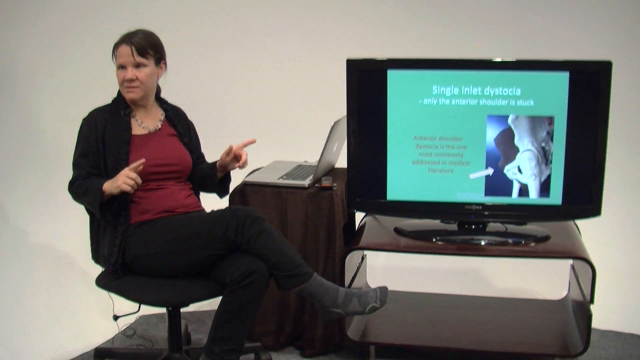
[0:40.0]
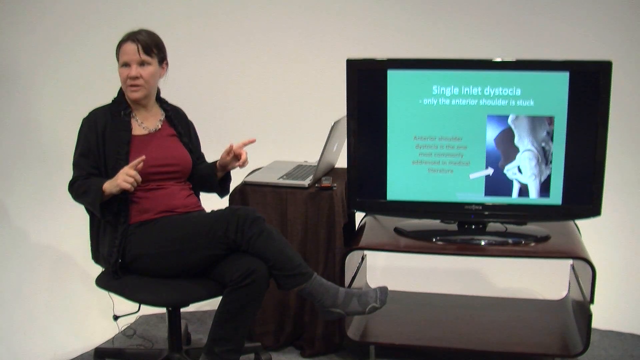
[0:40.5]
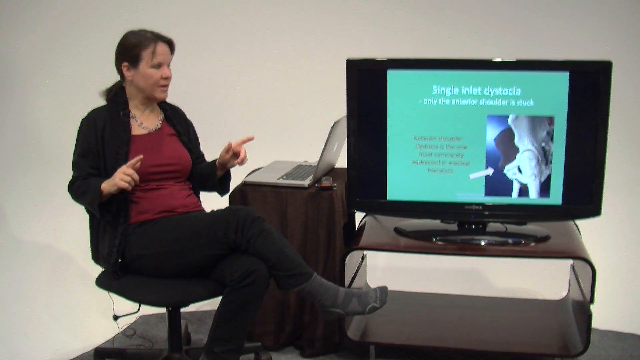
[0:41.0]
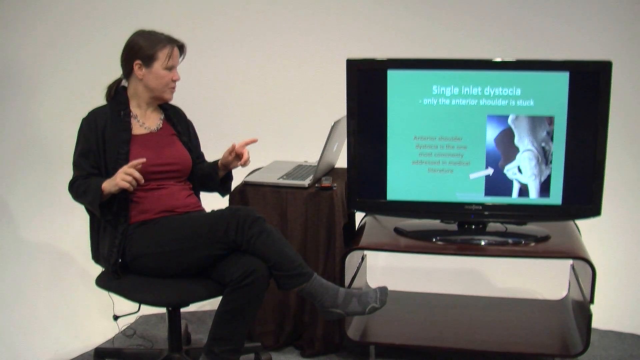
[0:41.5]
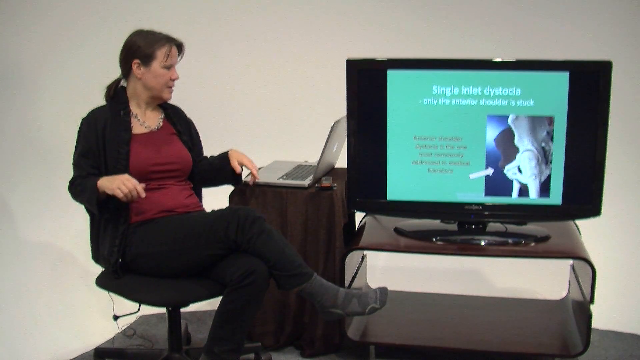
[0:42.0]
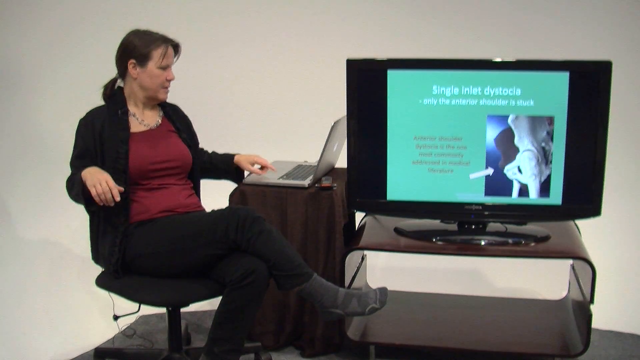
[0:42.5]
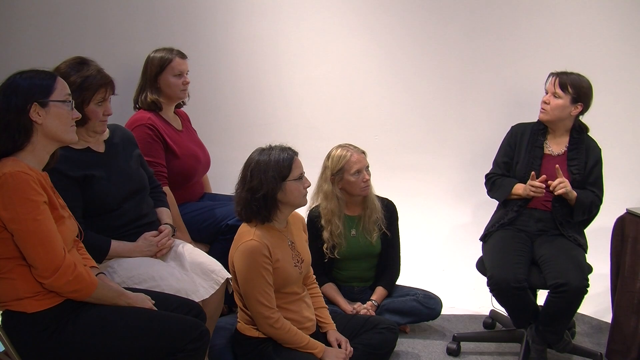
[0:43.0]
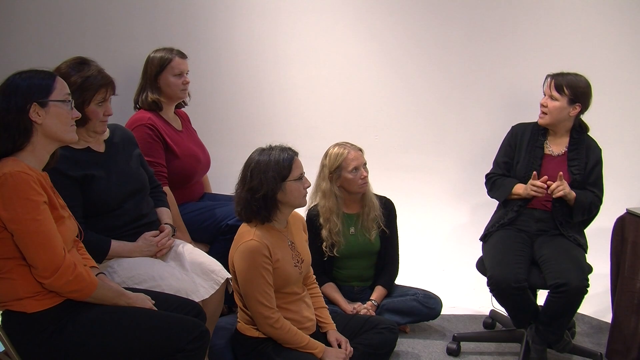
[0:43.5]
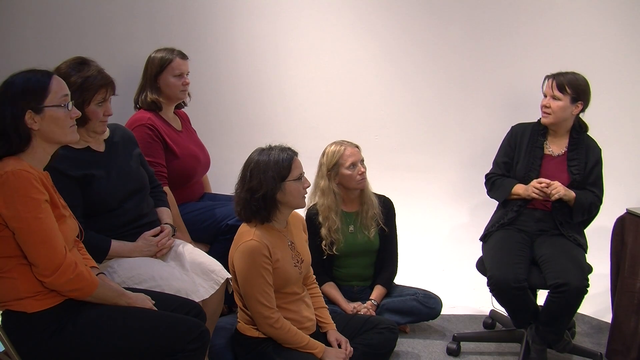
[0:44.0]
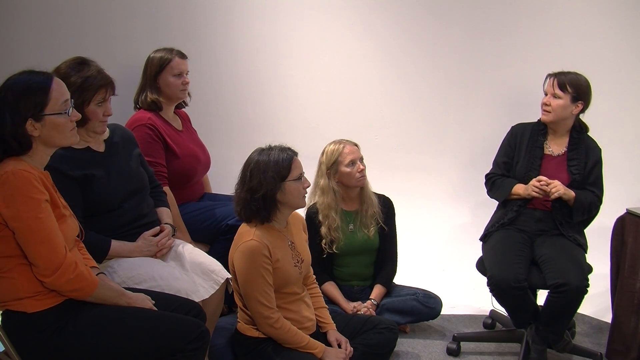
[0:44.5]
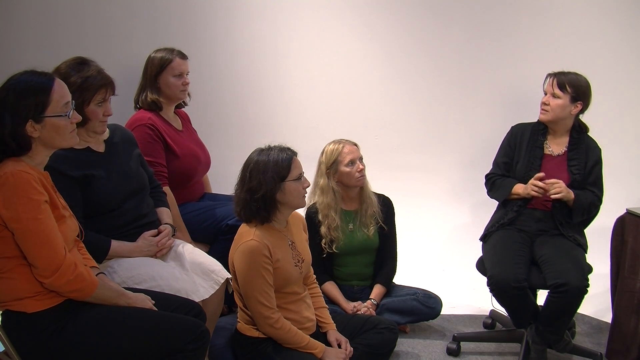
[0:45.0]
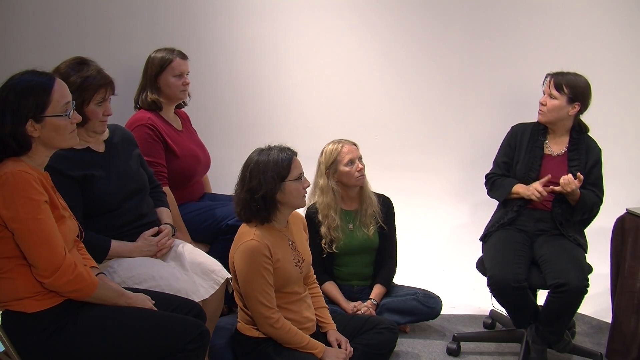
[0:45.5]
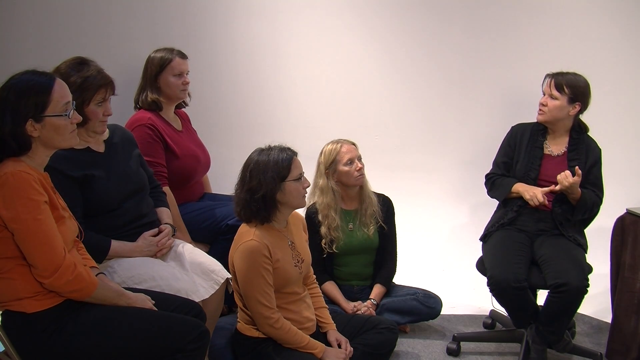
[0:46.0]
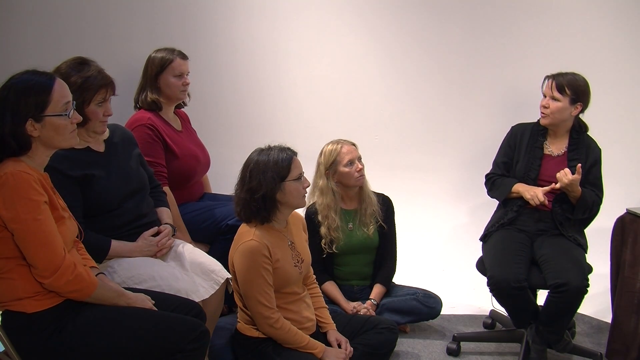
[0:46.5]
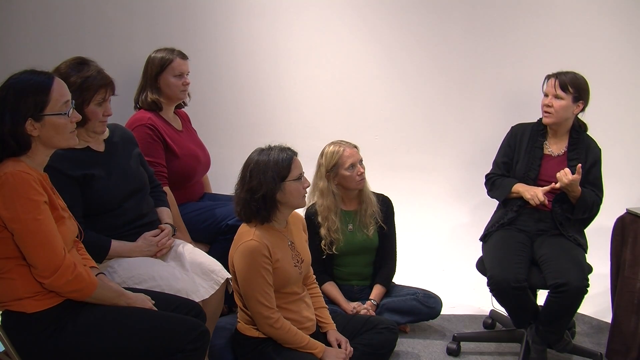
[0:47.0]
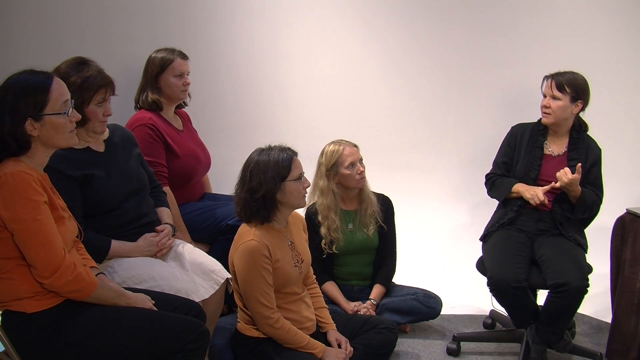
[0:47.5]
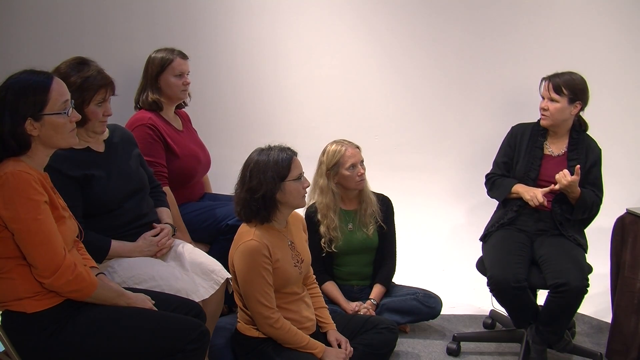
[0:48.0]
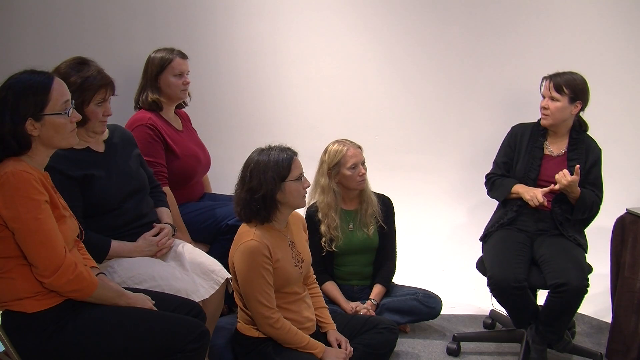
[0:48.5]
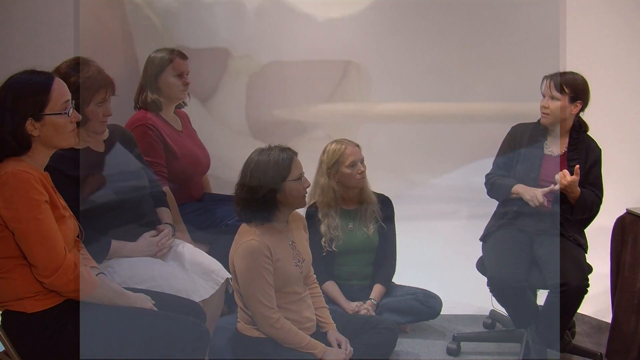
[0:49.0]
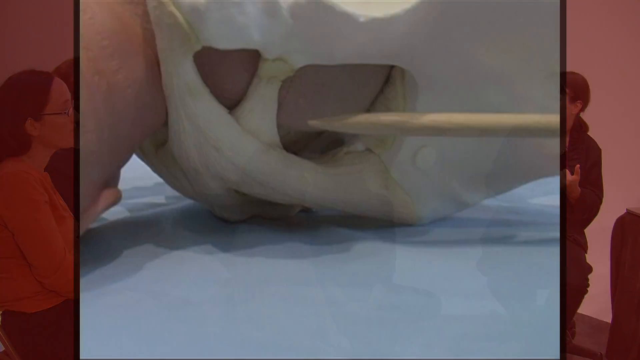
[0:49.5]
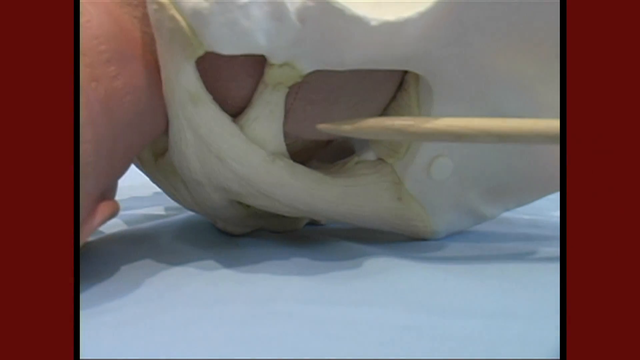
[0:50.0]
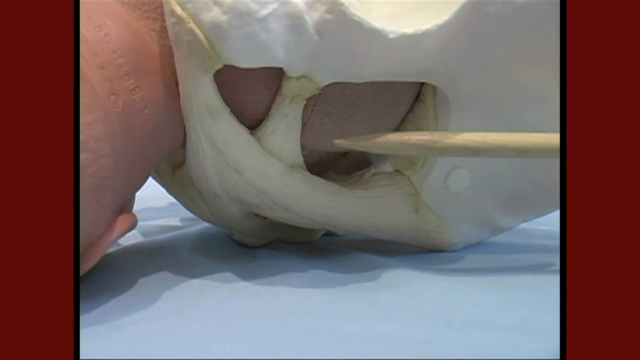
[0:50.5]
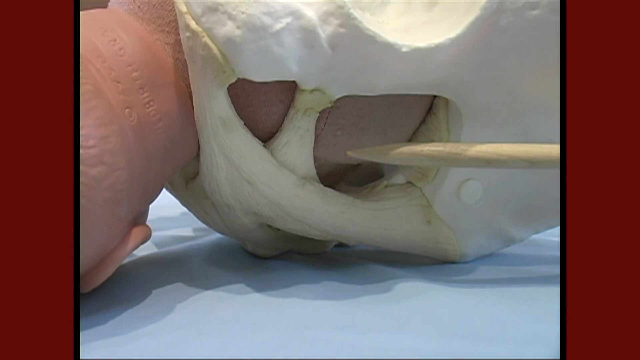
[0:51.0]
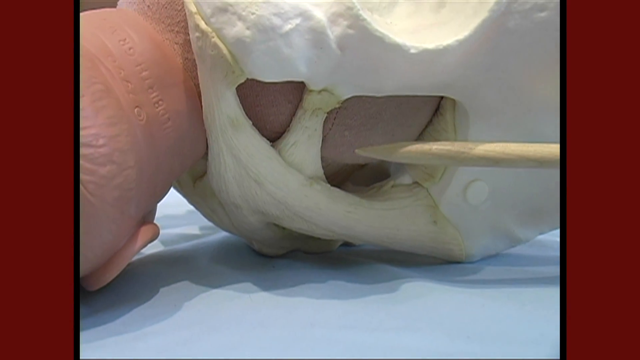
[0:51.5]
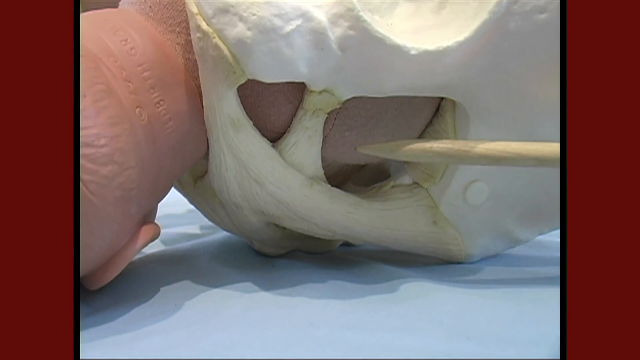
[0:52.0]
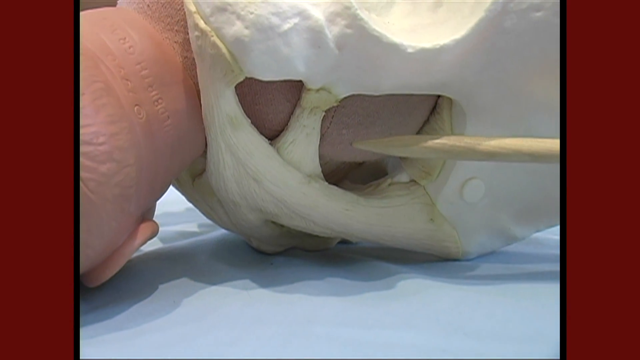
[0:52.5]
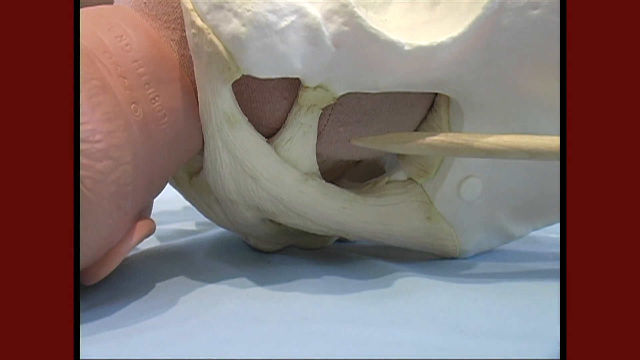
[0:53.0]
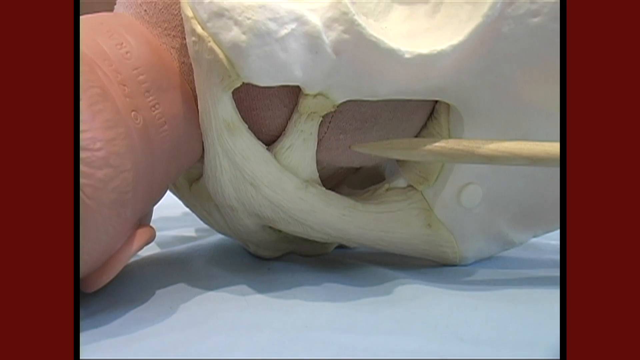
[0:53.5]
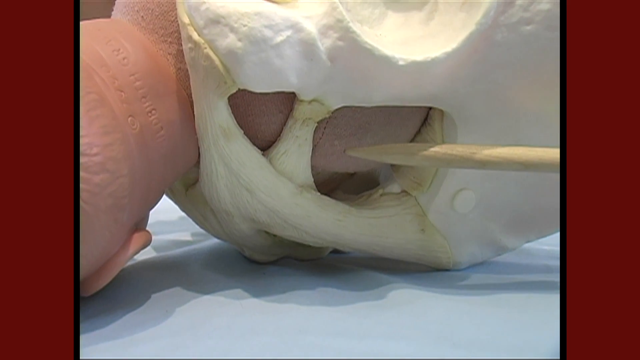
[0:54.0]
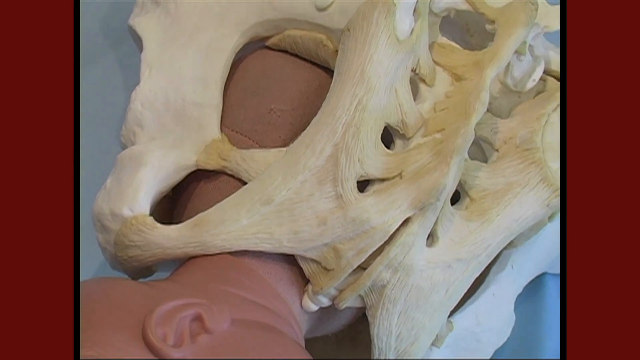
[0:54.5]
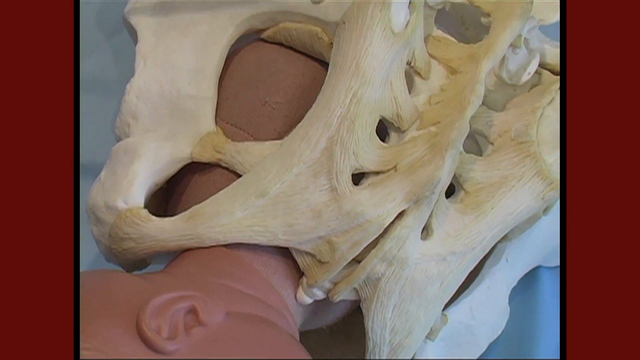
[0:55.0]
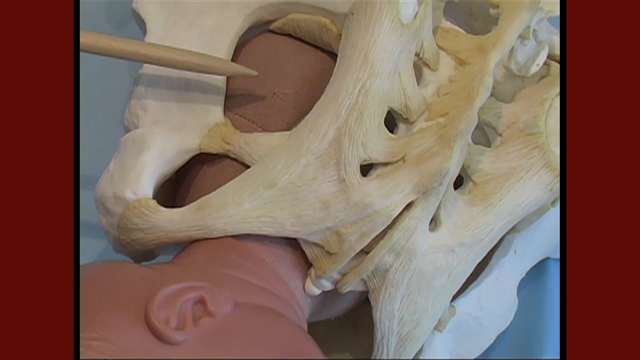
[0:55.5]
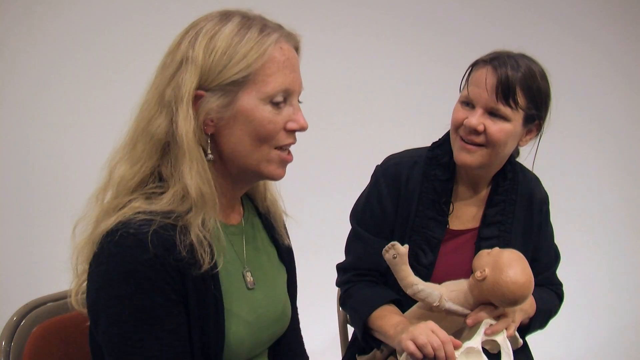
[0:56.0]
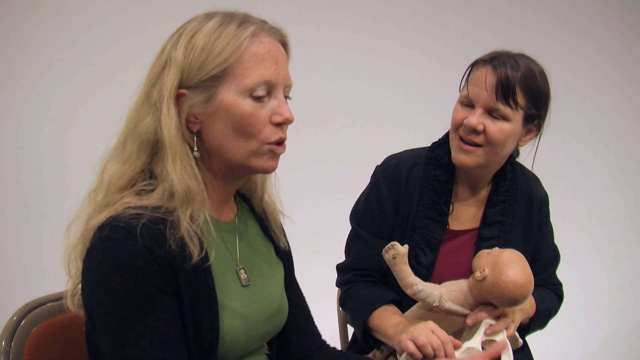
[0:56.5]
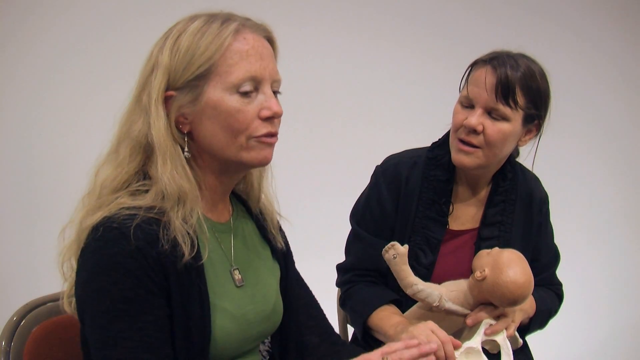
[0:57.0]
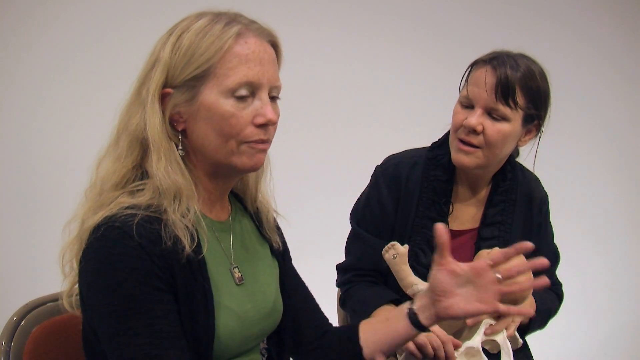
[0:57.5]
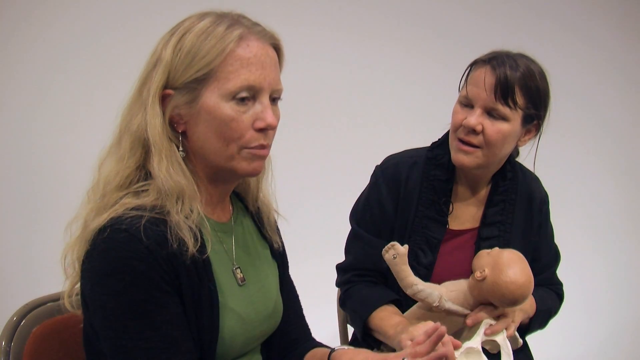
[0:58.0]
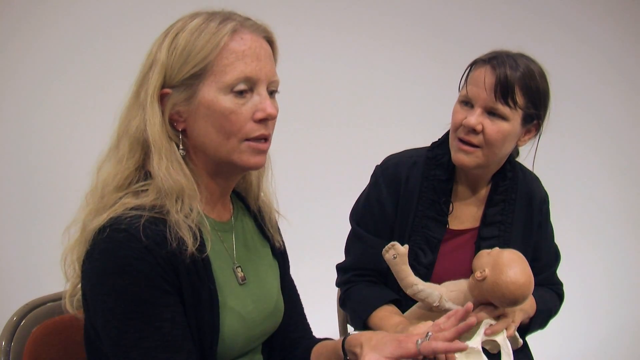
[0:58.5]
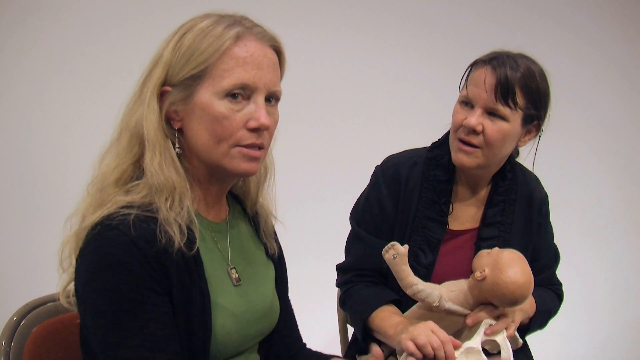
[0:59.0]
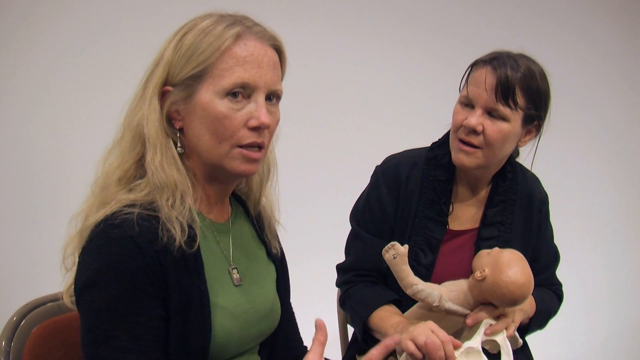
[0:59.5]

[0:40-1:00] Gail sits in front of the screen, where the slide has changed to read "single inlet dystocia, only the anterior shoulder is stuck". Gail appears to be talking to the midwives about this type of dystocia, and the midwives nod in agreement. The camera angle changes to what appears to be a dummy baby in a pelvis, shot quite close up and hard to see, with a wooden instrument pointing toward the baby's shoulder, presumably the shoulder that is stuck. An overhead view of the dummy baby in the pelvis is shown before the shot changes to Gail holding the dummy baby in her arms. She is sitting next to a Caucasian woman with long blonde hair who is talking, presumably about her experiences in the delivery suite as a midwife.